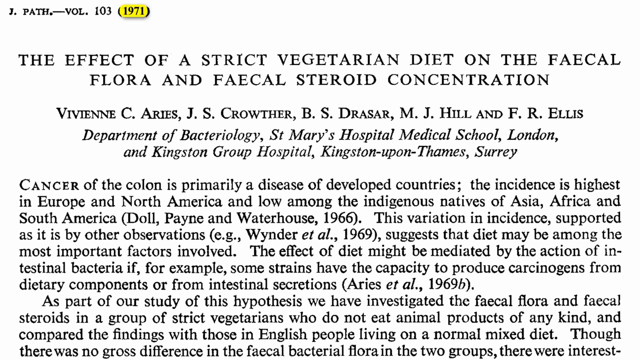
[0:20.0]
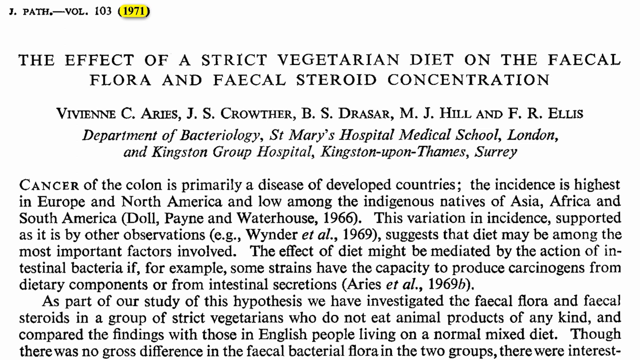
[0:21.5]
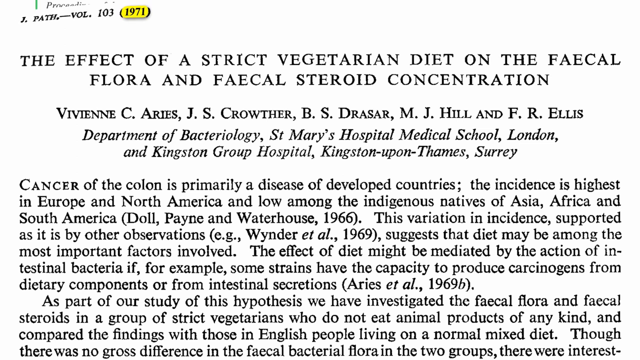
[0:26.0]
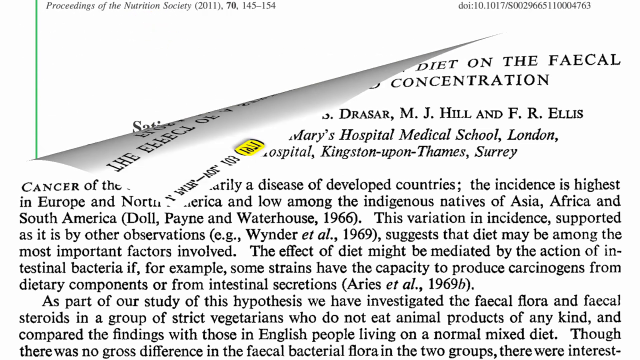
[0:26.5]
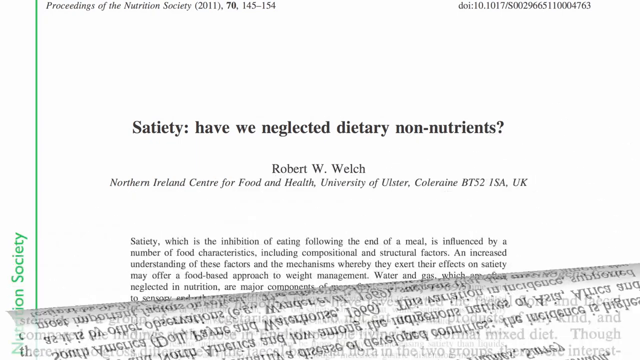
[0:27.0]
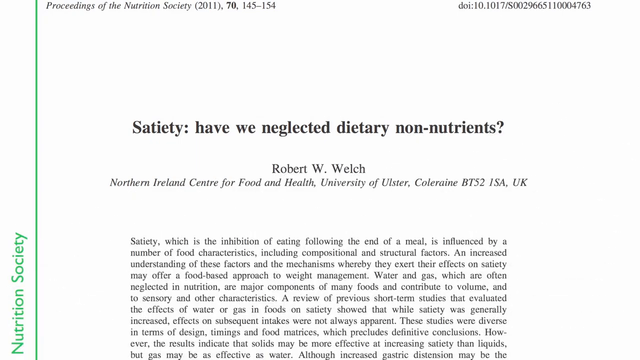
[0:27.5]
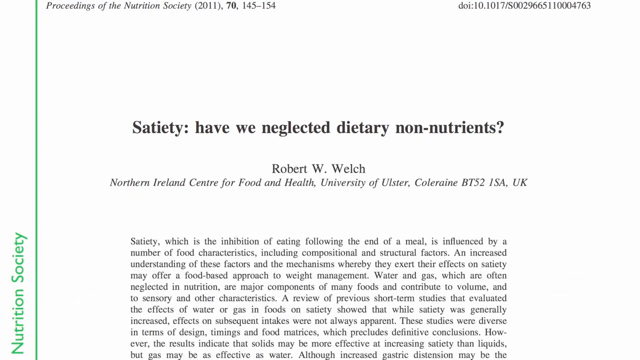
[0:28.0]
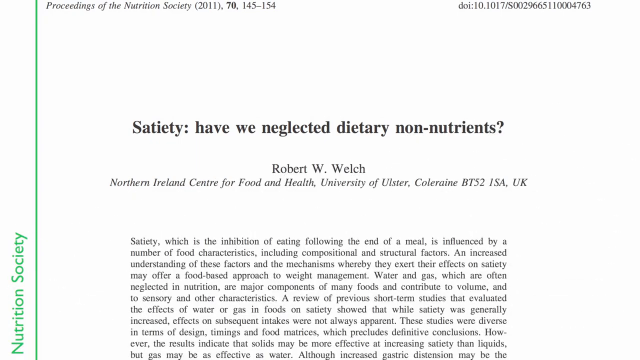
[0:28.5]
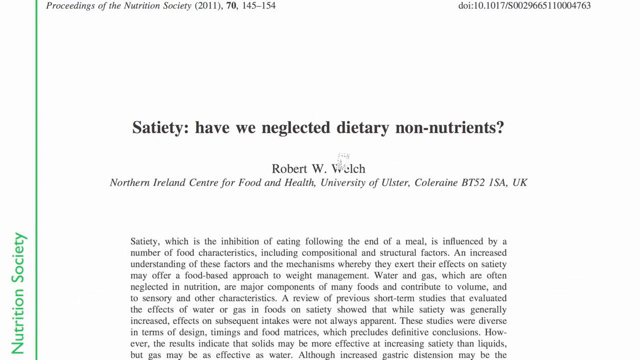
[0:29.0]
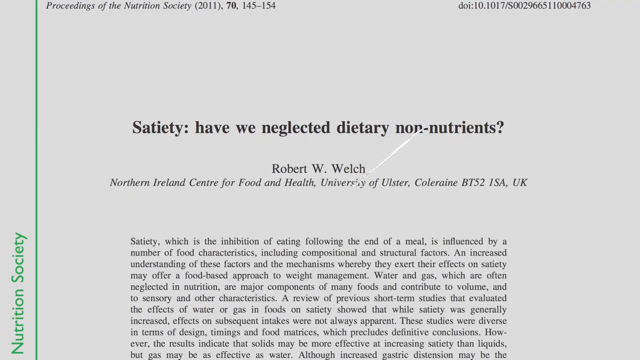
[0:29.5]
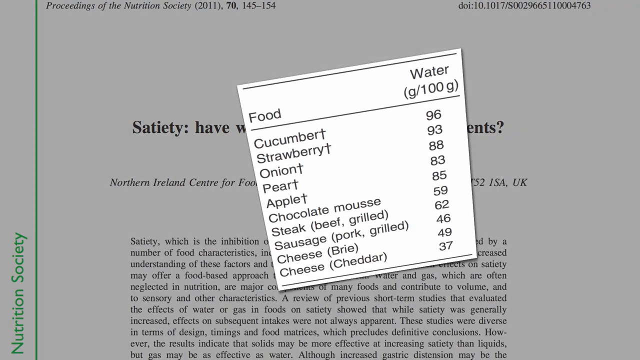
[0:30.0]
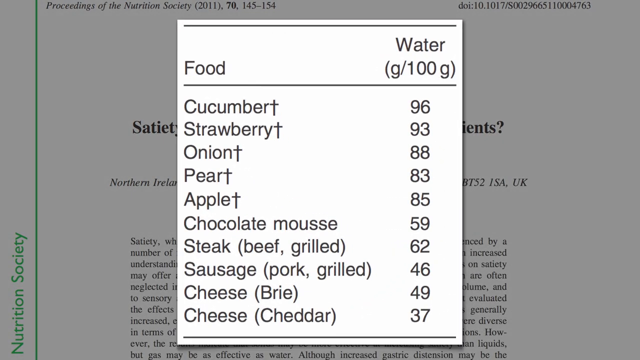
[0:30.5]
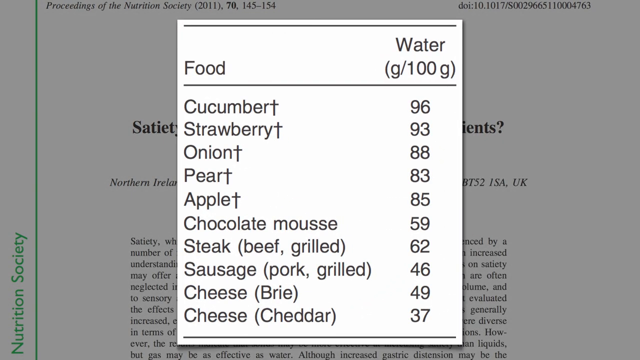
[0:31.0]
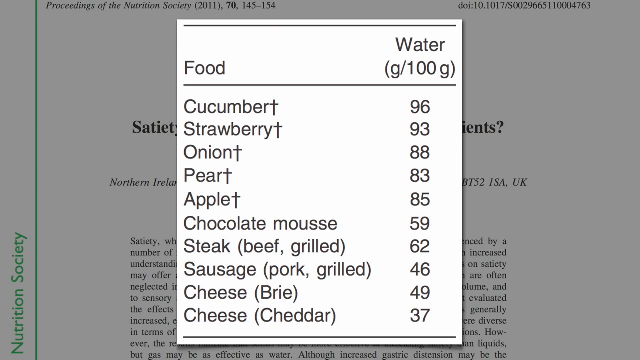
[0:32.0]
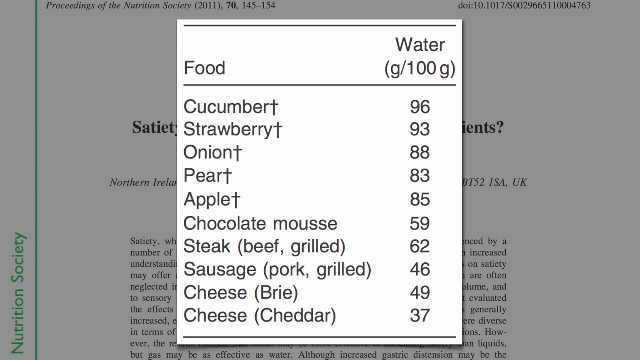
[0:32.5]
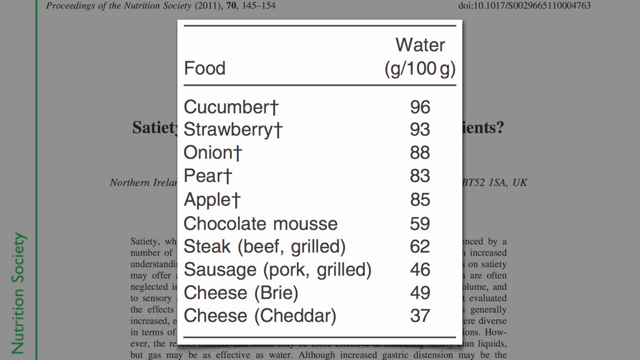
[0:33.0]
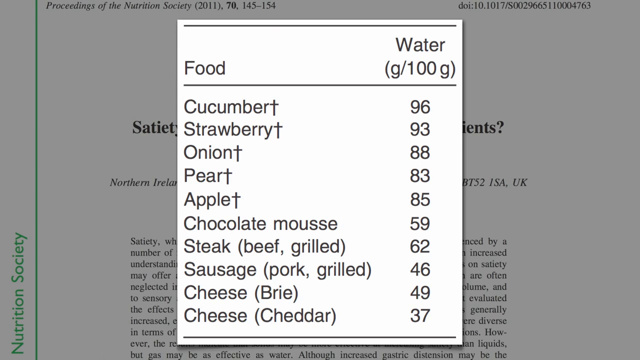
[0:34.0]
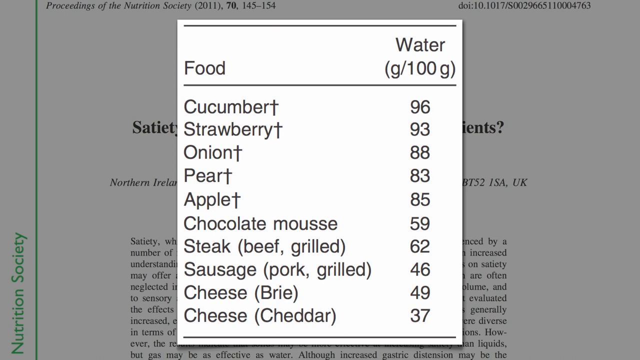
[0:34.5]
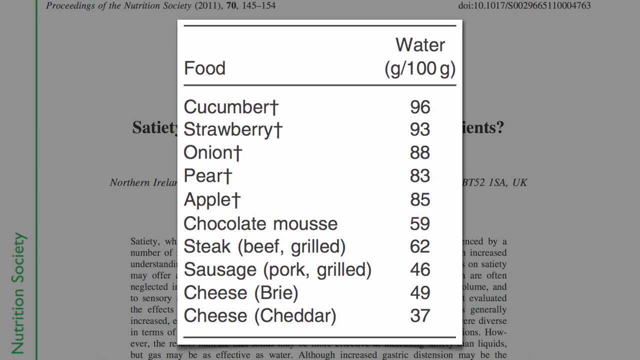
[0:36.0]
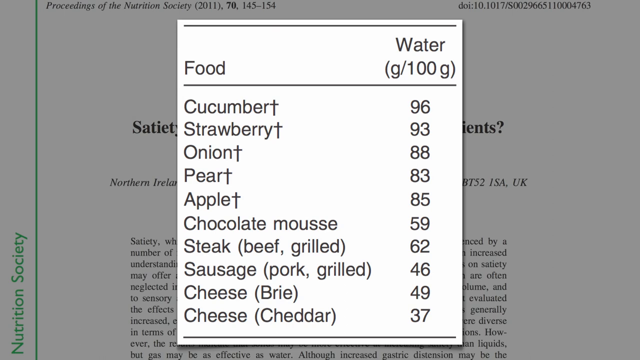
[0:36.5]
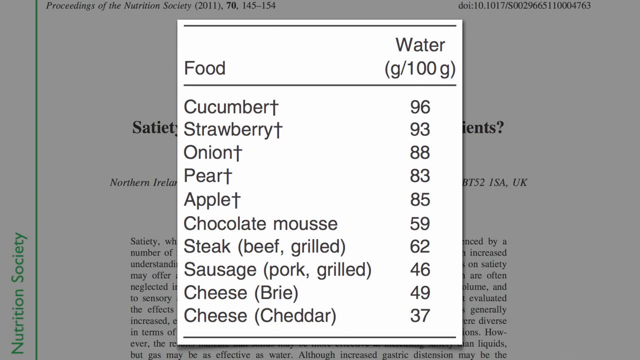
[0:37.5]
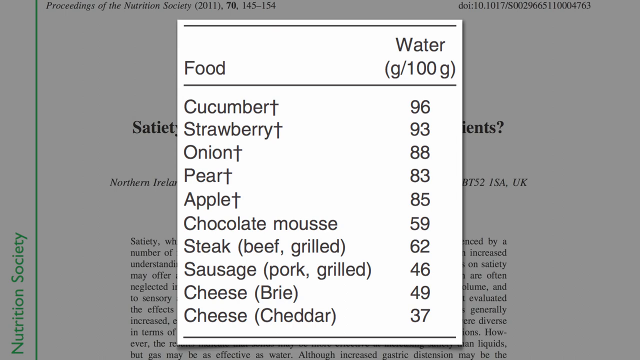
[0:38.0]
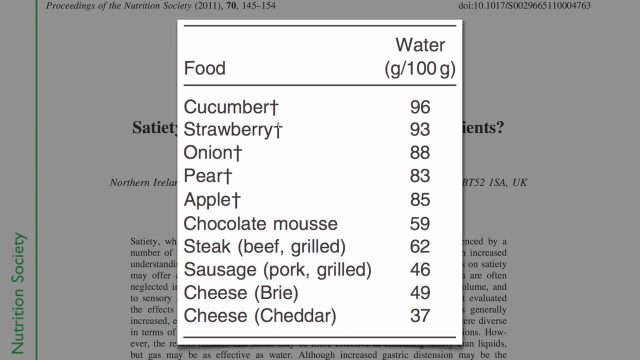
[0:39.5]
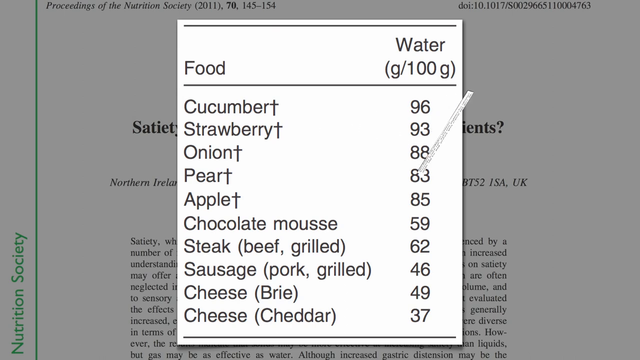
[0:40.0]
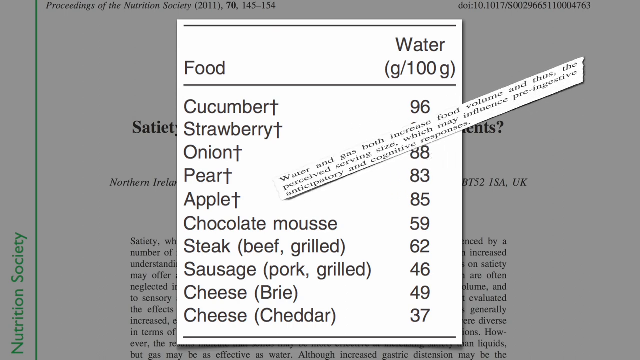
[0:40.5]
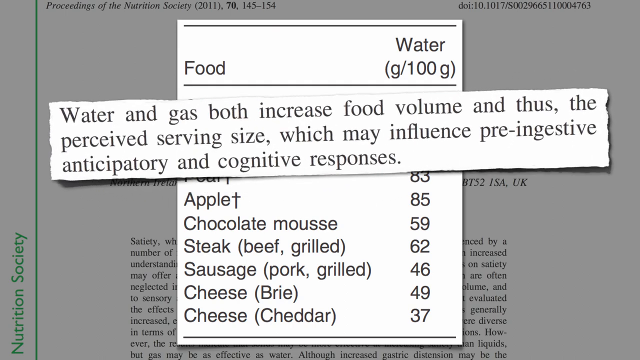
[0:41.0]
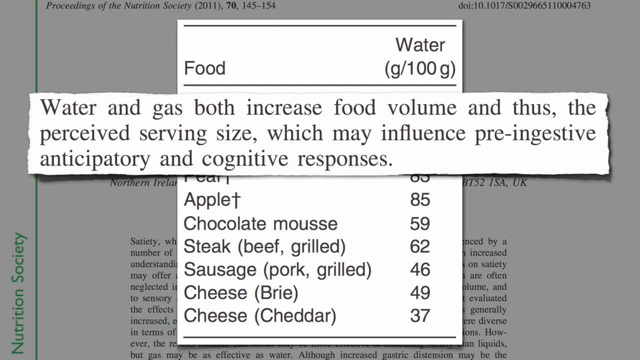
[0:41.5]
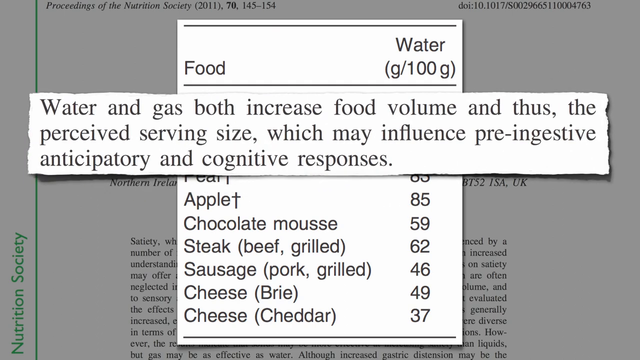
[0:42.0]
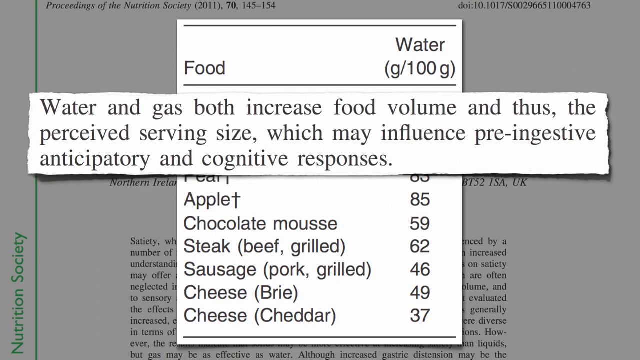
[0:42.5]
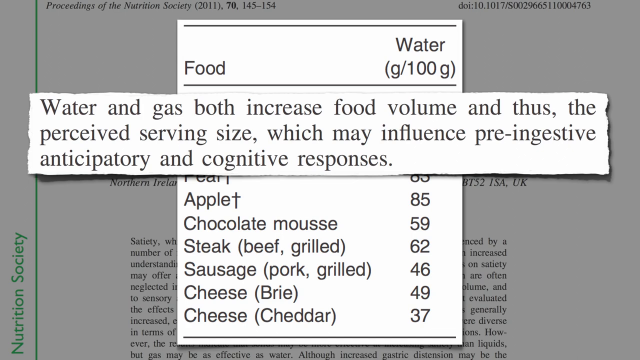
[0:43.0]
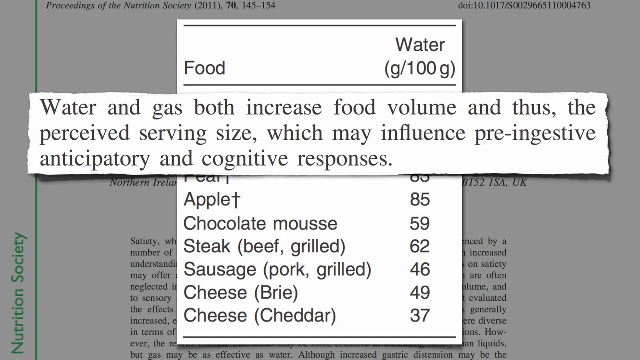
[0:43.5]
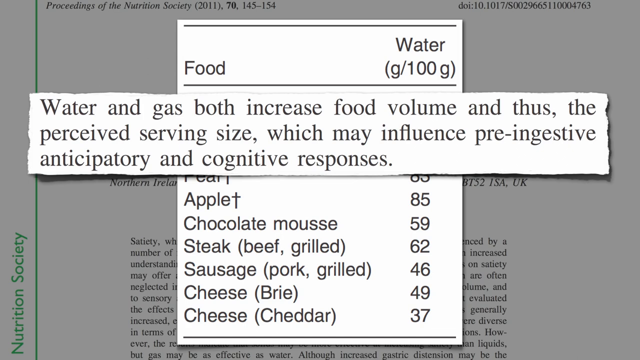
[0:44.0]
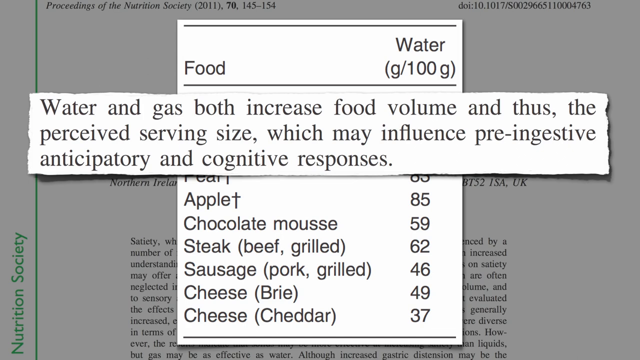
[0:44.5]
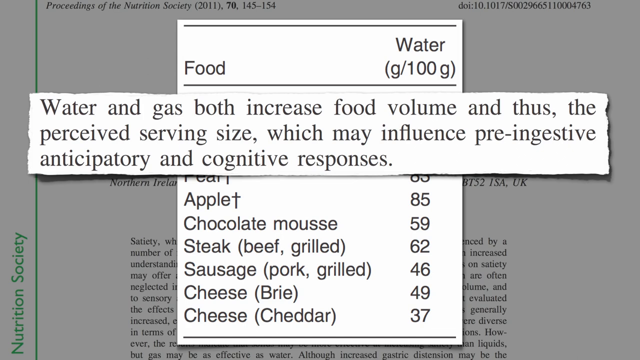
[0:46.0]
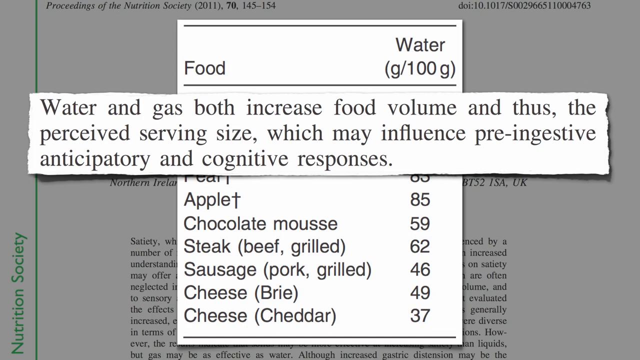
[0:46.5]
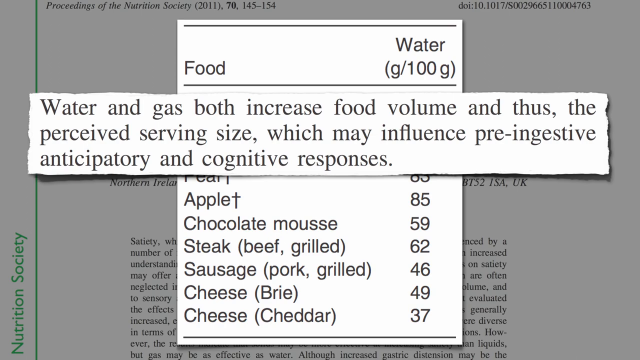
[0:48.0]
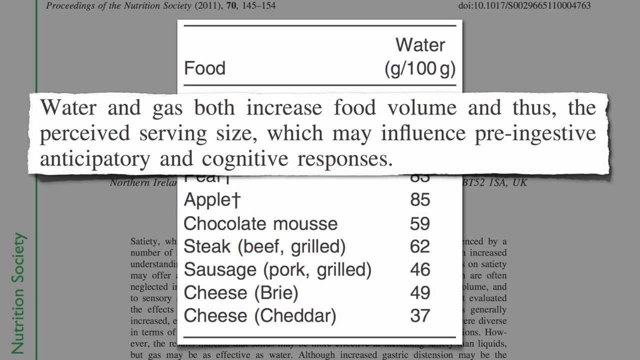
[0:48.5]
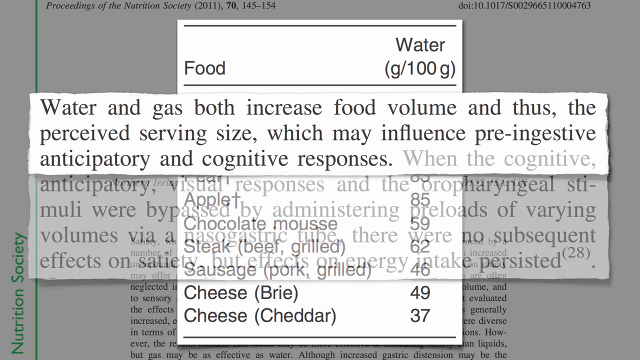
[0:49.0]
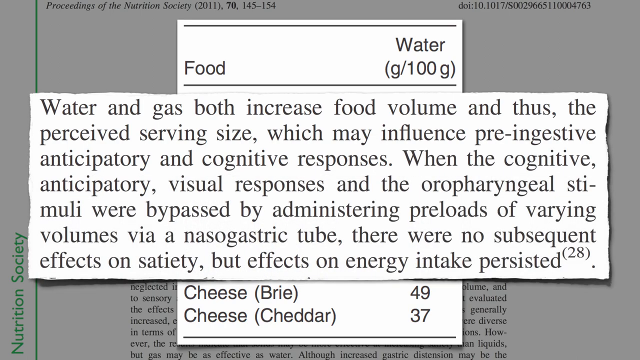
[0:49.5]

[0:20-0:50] The page continues with the text "cancer of the colon is primarily a disease of developed countries;". The video then shows a white background covered with a lot of black text. At the top left it reads "J.Path.-Volume 103-1971," followed by the title "The effect of a strict vegetarian diet on the faecal flora and faecal steroid concentration." Below that is a list of author names including "C. Aries," "J.S. Crother," and "B.S. Drassar, M.J. Hill, and F.R. Ellis," and below that "Department of Bacteriology, St. Mary's Hospital Medical School, London, and Kingston Group Hospital, Kingston-upon-Thames, Surrey."